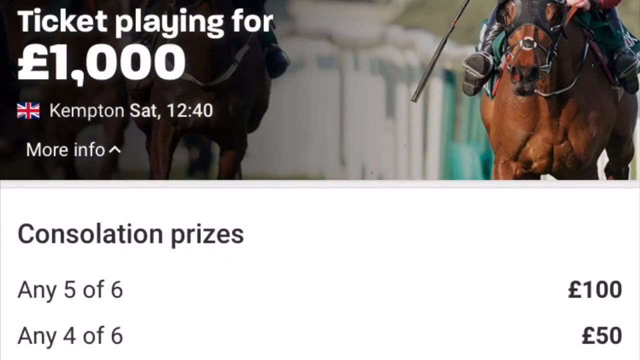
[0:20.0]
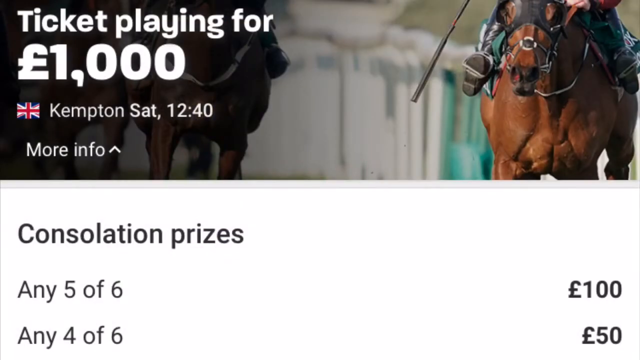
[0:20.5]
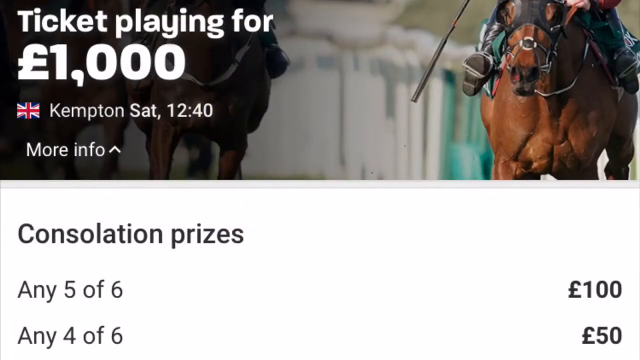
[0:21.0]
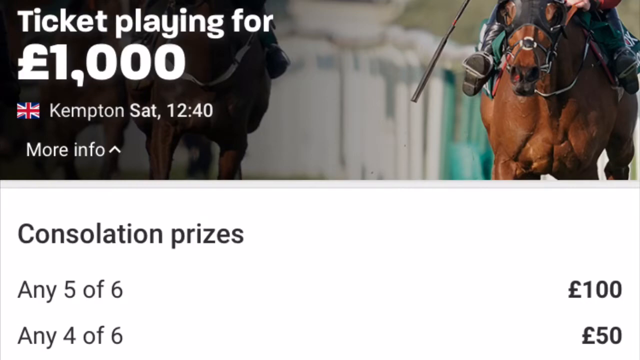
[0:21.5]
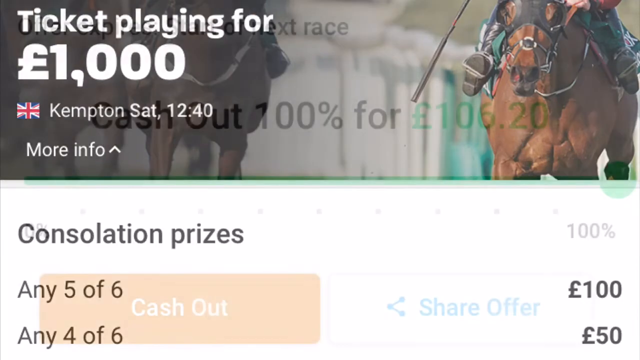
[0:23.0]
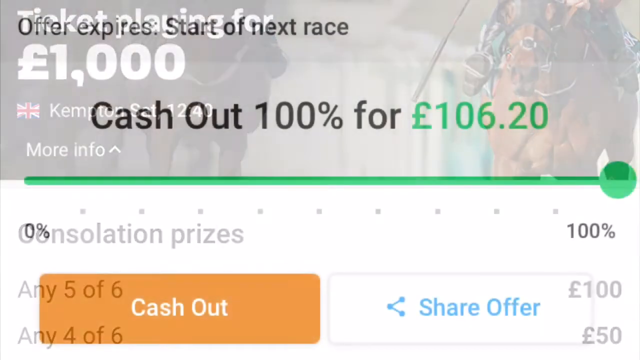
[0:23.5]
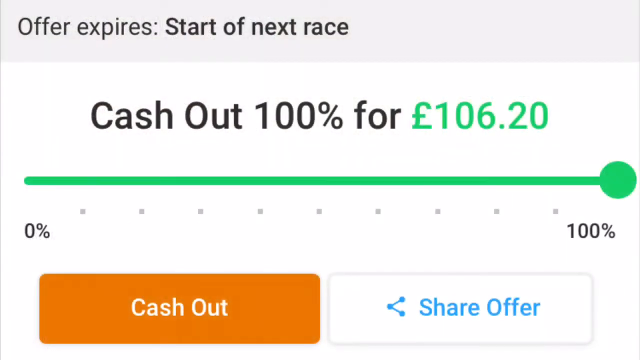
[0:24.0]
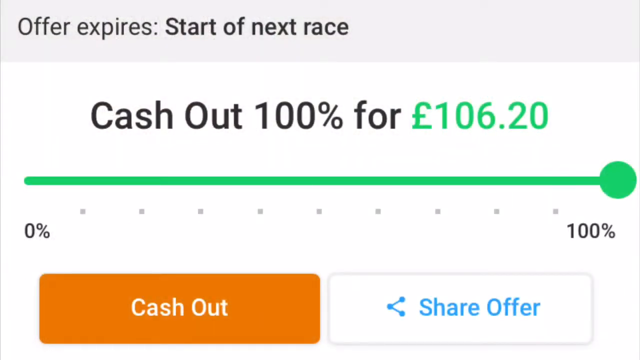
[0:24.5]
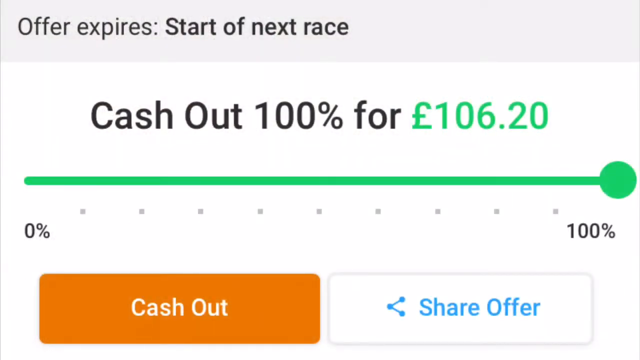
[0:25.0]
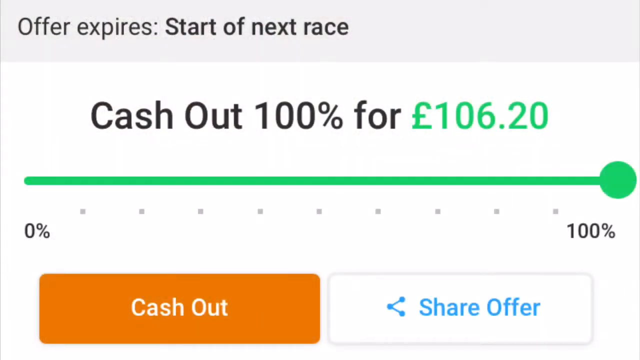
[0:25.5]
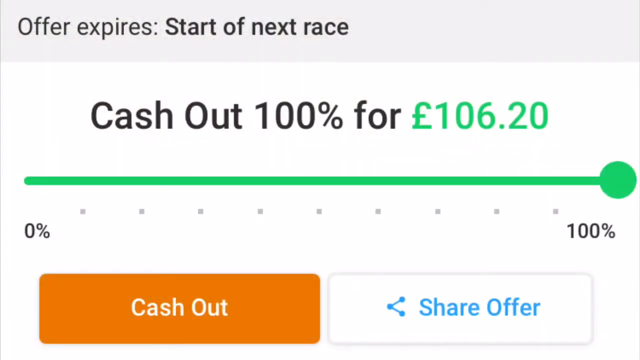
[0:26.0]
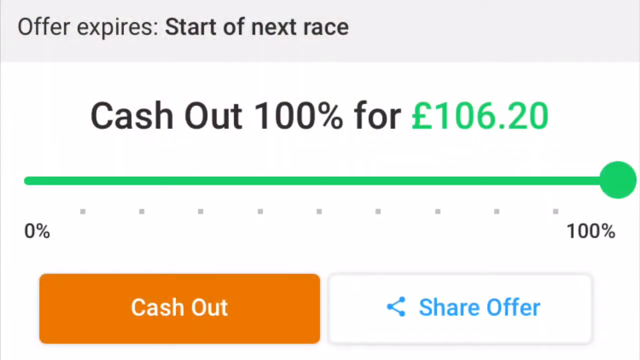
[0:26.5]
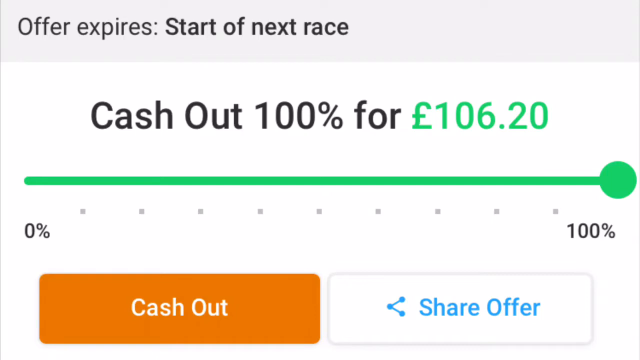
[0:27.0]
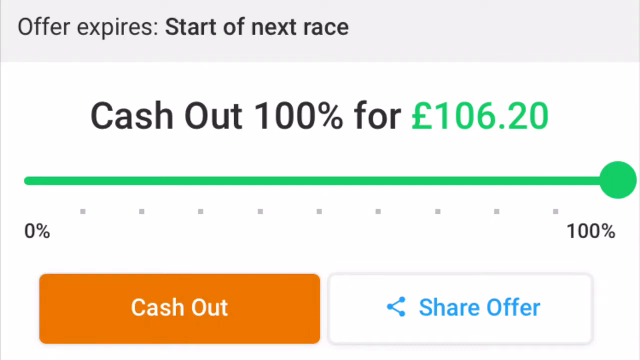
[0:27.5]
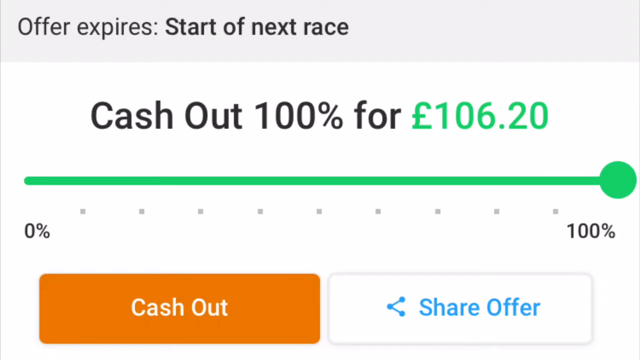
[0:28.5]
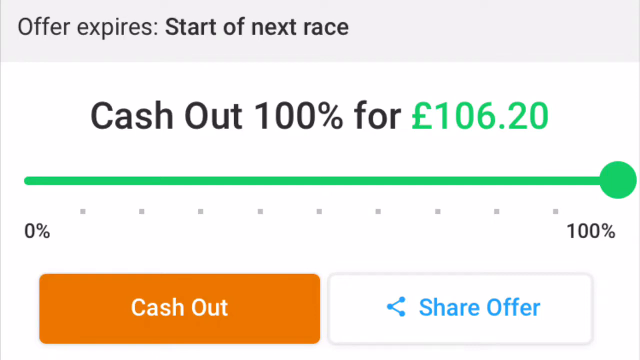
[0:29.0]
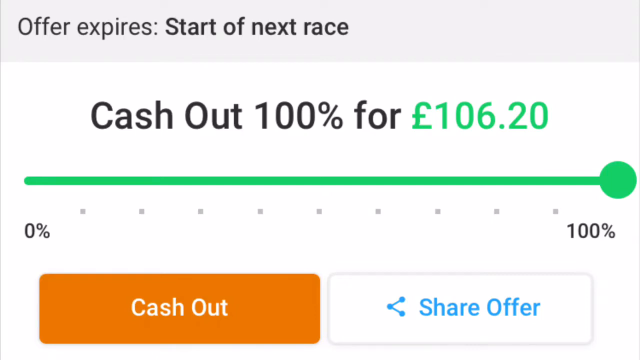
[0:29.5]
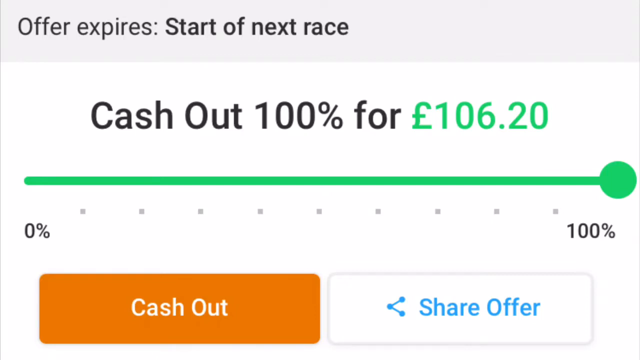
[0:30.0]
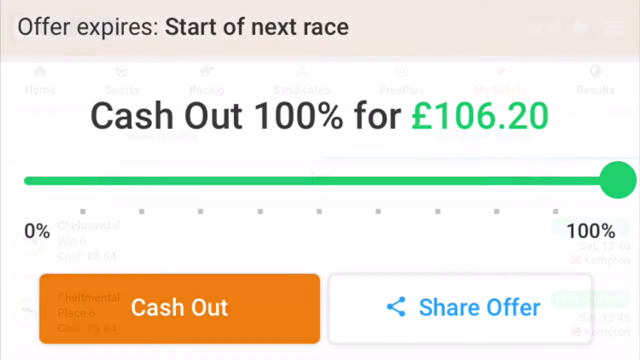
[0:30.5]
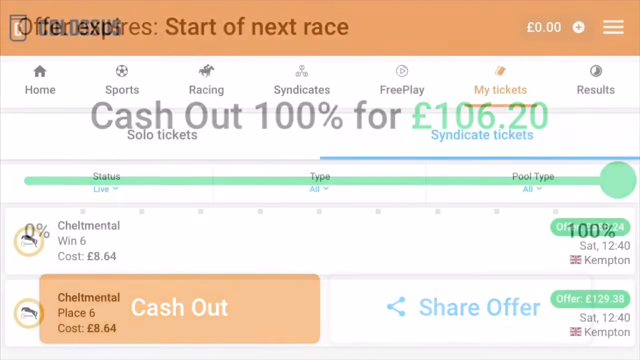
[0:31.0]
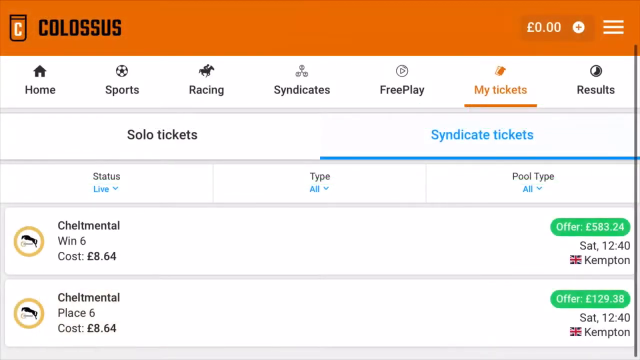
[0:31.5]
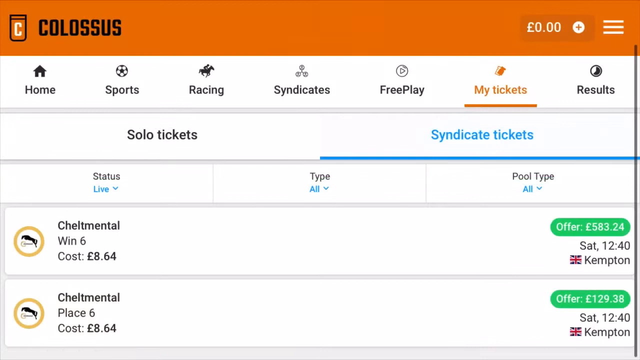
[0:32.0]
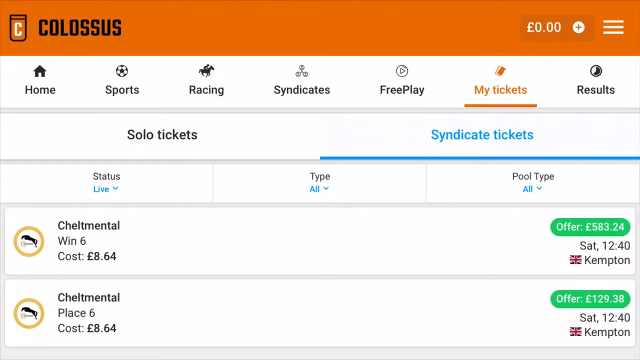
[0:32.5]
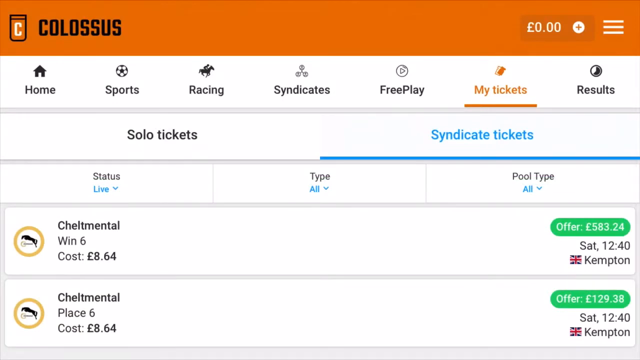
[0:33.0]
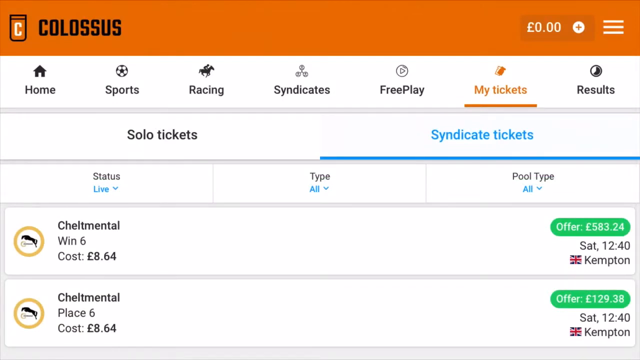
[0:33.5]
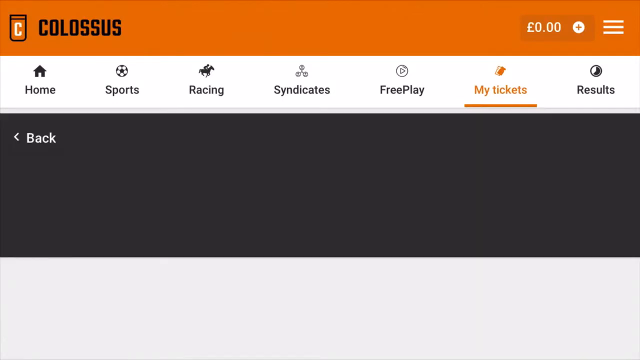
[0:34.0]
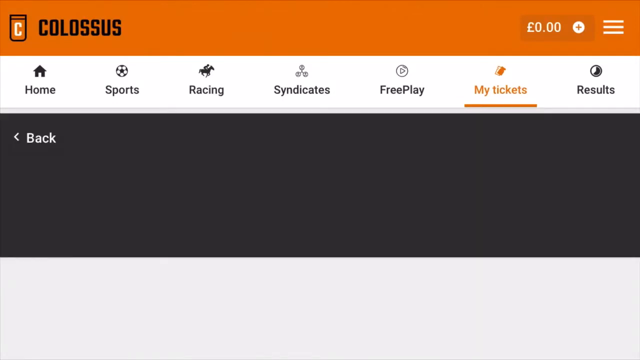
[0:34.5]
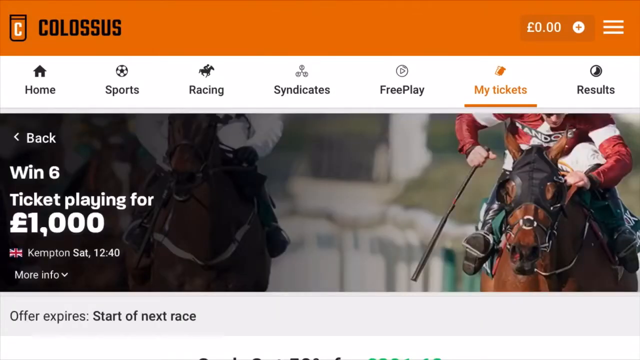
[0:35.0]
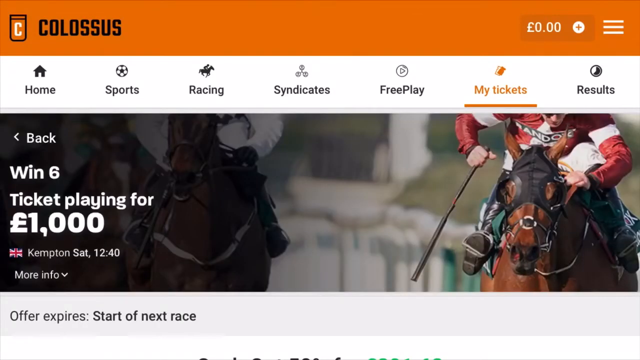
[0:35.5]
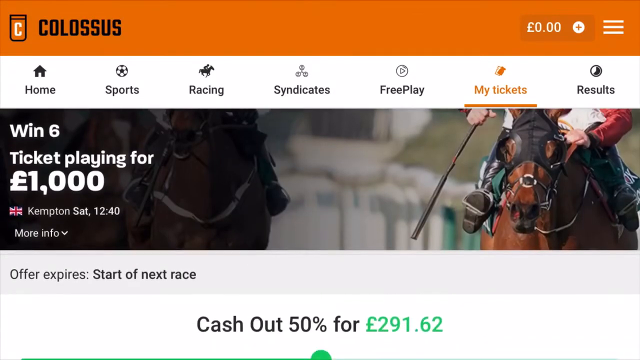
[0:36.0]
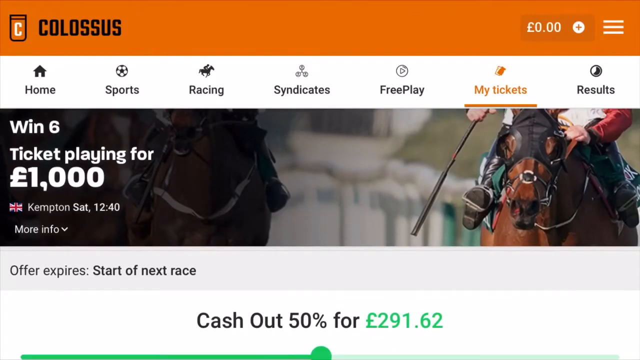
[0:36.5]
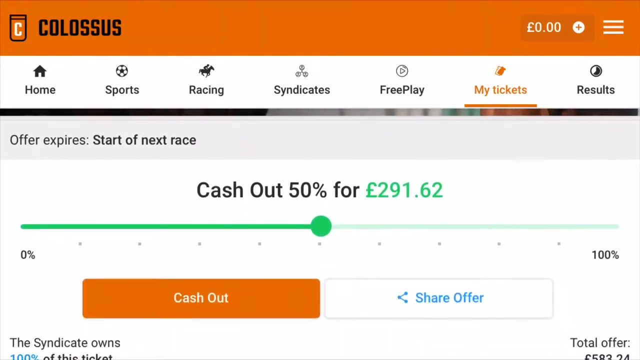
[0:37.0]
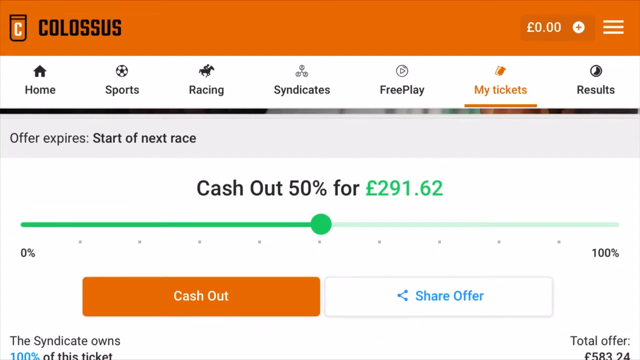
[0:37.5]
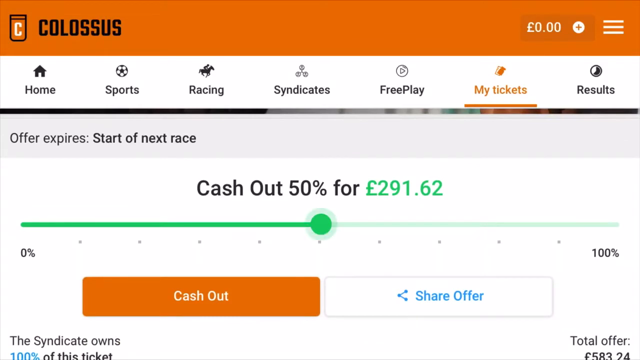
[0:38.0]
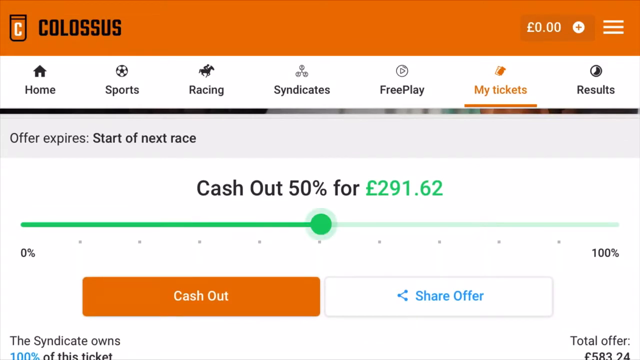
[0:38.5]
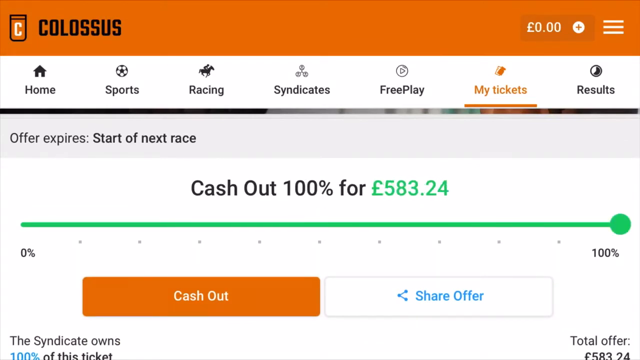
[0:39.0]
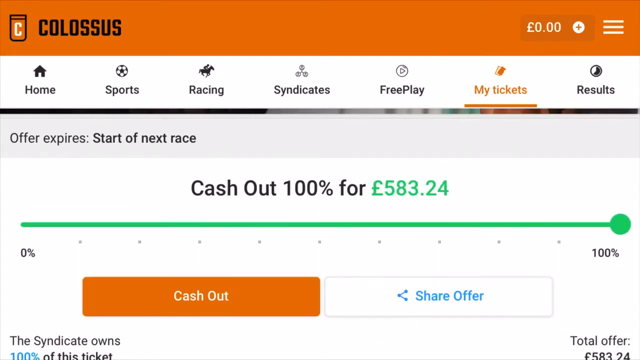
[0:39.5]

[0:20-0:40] The video opens with a ticket playing for 1,000, in a foreign currency rather than US dollars. It skips to another screen that says "offer expires start of the race". In big, bold, black letters it says "cash out 100% for" and "106.20", again in a foreign denomination. A green line runs horizontally from the left side of the screen to the right, with a big green circle at the right end, and beneath the line there is "0%" on the left and "100%" on the right. "Cash out" is on the left side, and next to it is "share offer". A Colossus page then appears that says "win six", and someone scrolls the screen upward, showing a lot of information. Another page follows with a lot of information, showing the amounts for cashing out at 50% or 100% and the difference between them.